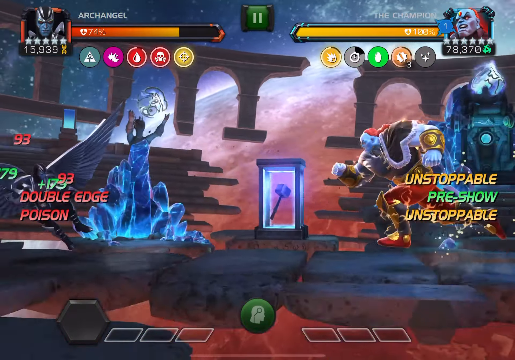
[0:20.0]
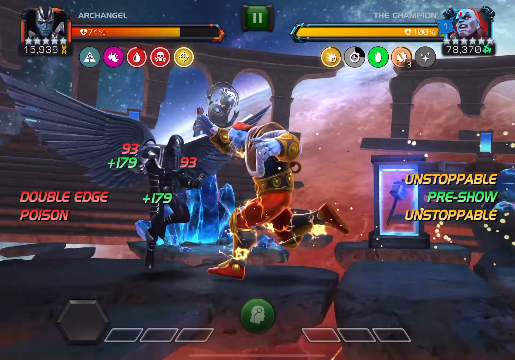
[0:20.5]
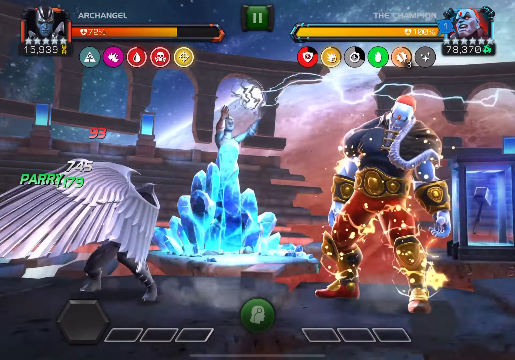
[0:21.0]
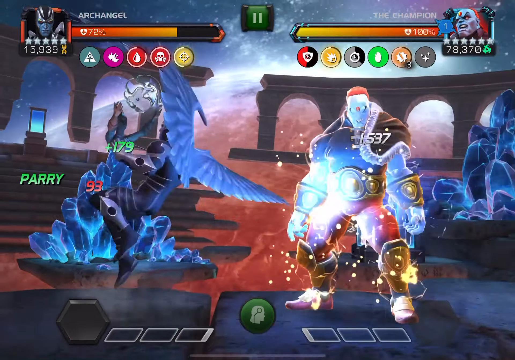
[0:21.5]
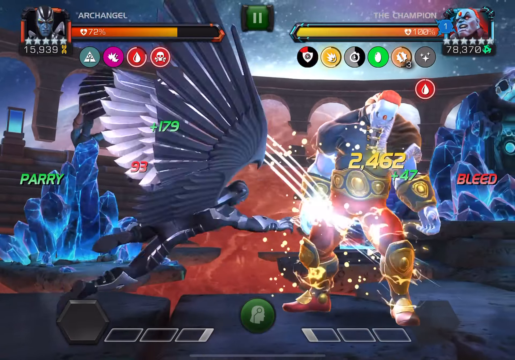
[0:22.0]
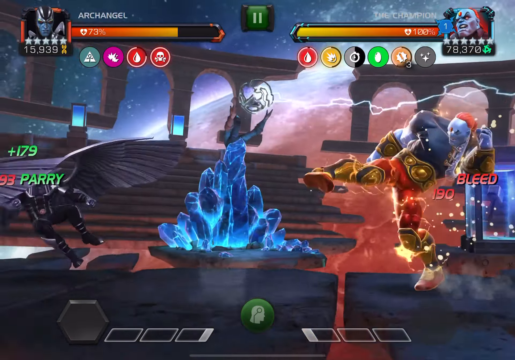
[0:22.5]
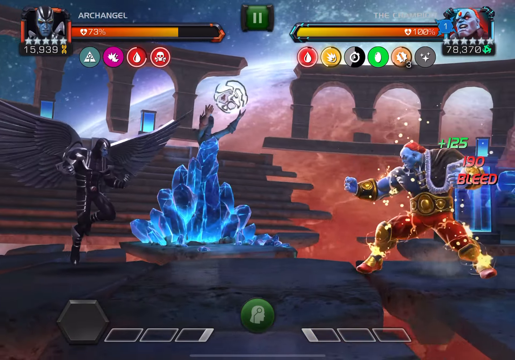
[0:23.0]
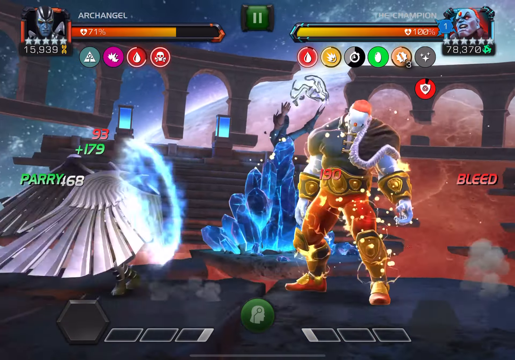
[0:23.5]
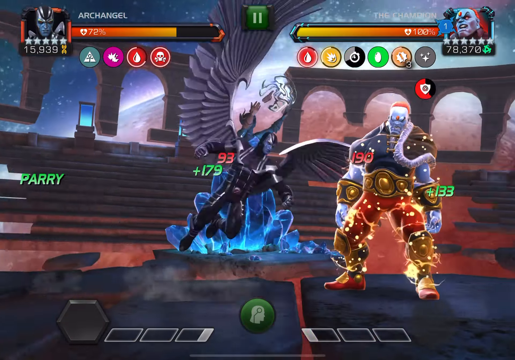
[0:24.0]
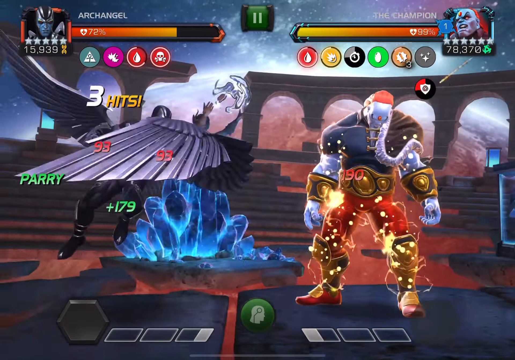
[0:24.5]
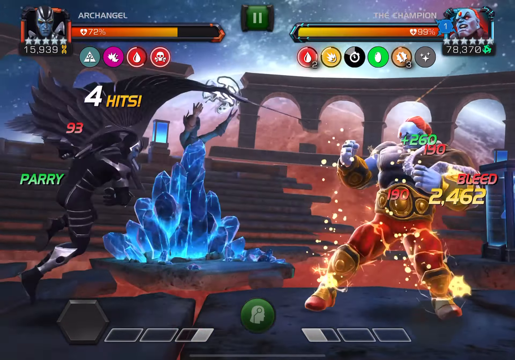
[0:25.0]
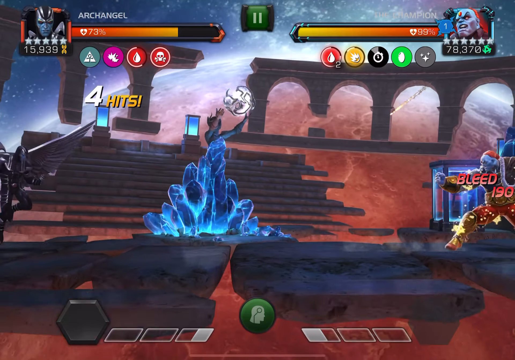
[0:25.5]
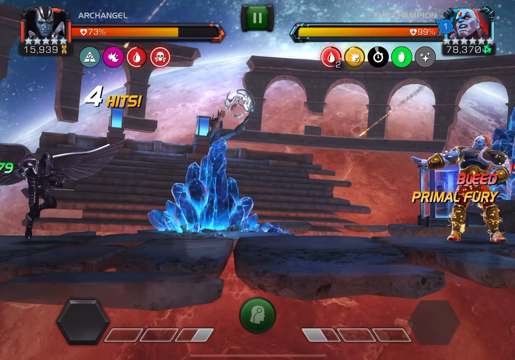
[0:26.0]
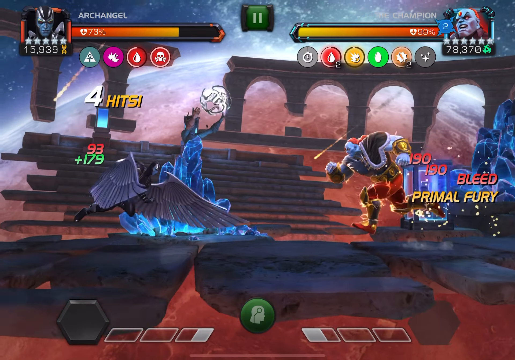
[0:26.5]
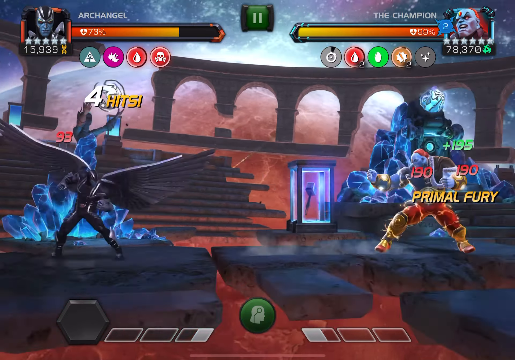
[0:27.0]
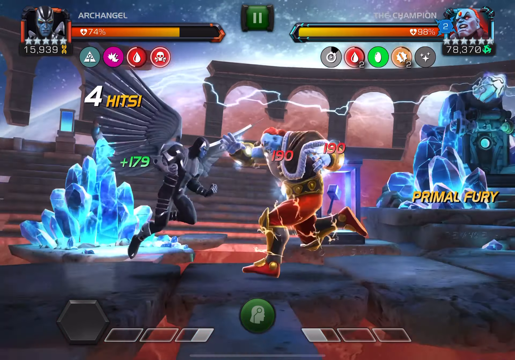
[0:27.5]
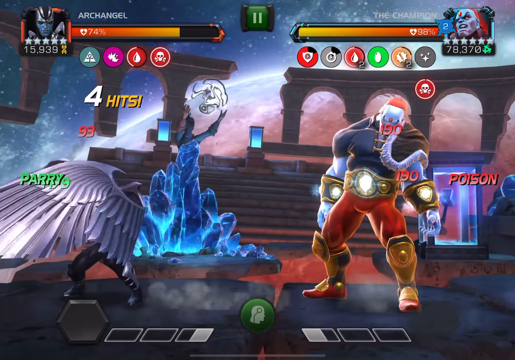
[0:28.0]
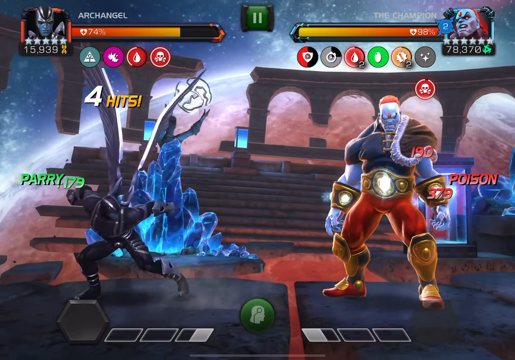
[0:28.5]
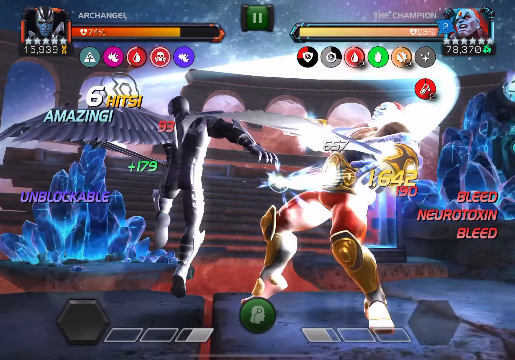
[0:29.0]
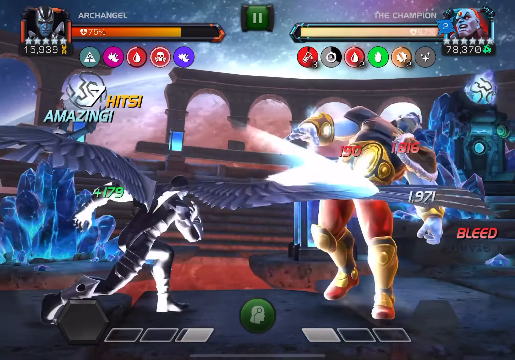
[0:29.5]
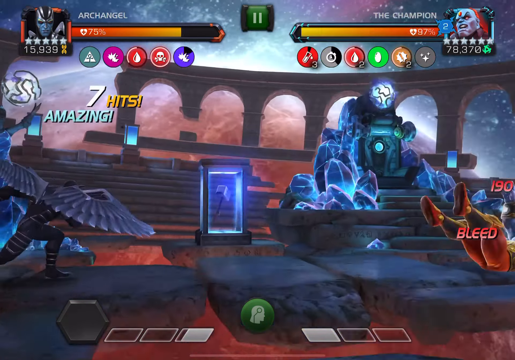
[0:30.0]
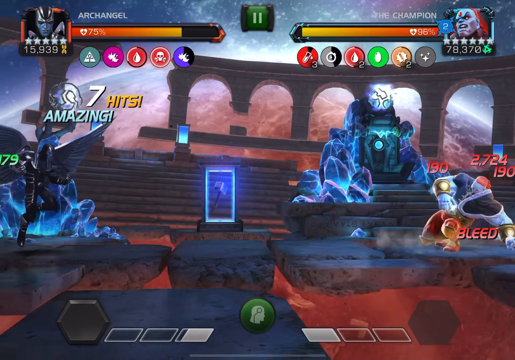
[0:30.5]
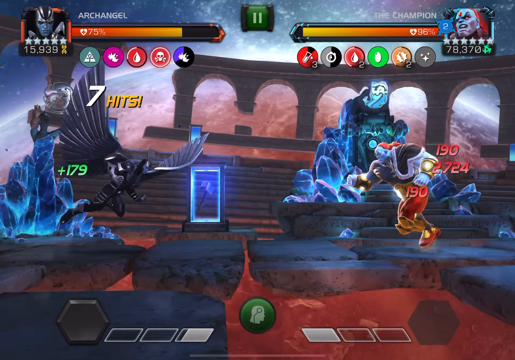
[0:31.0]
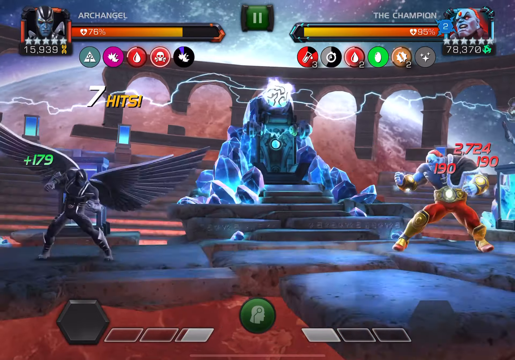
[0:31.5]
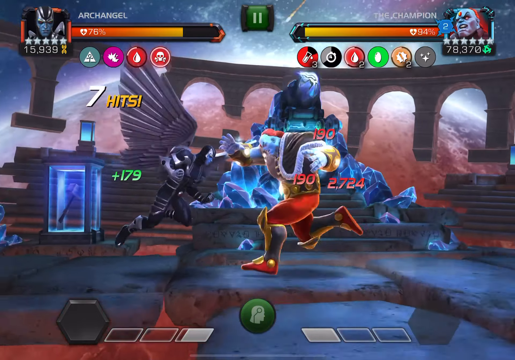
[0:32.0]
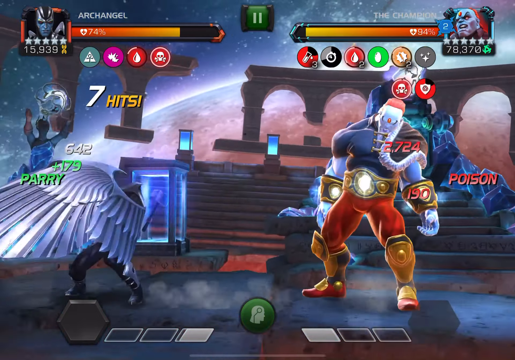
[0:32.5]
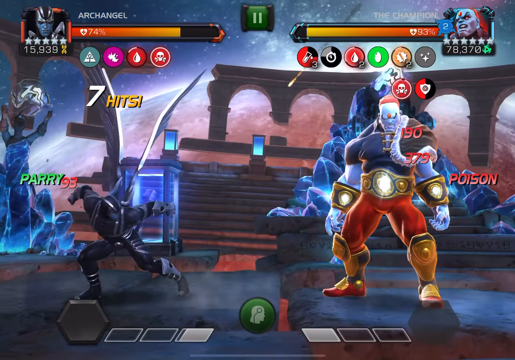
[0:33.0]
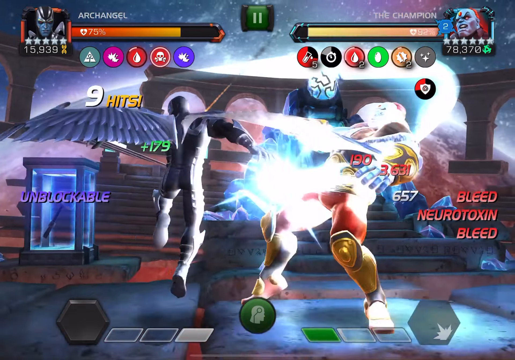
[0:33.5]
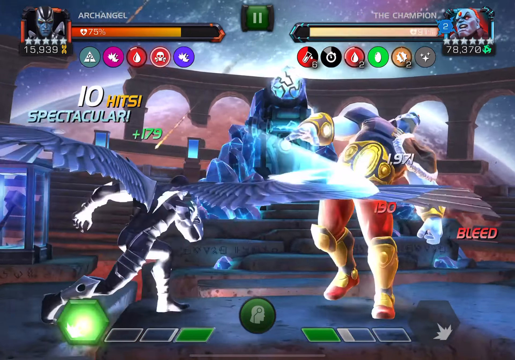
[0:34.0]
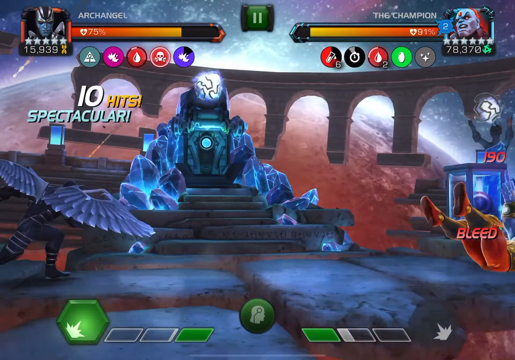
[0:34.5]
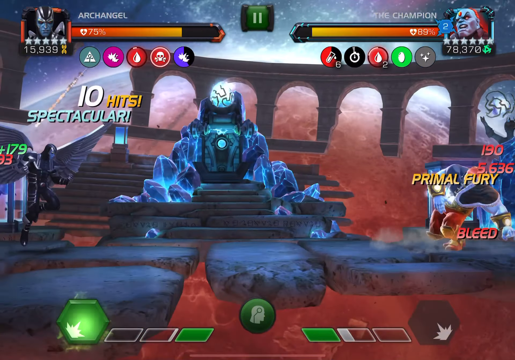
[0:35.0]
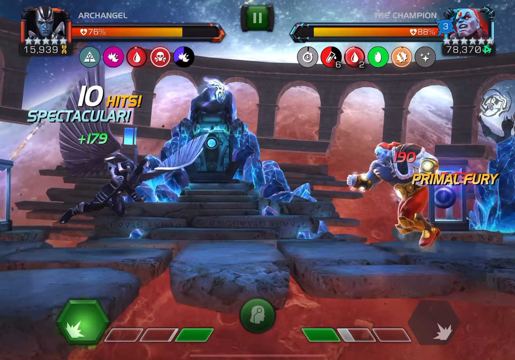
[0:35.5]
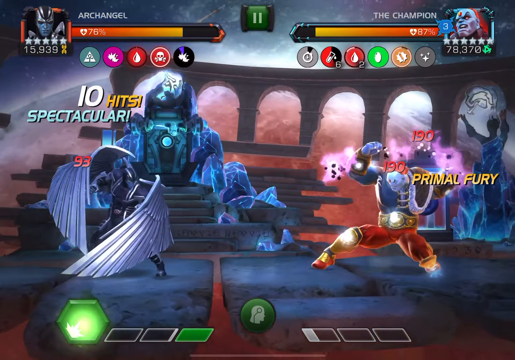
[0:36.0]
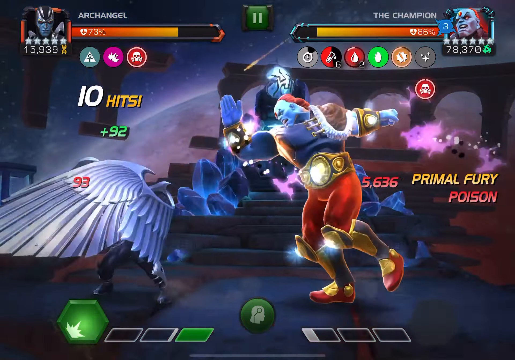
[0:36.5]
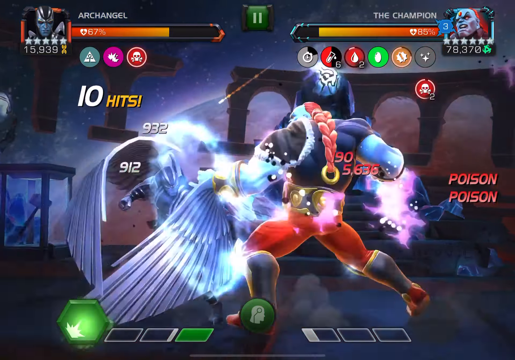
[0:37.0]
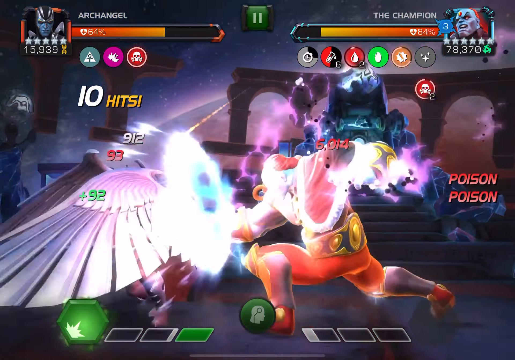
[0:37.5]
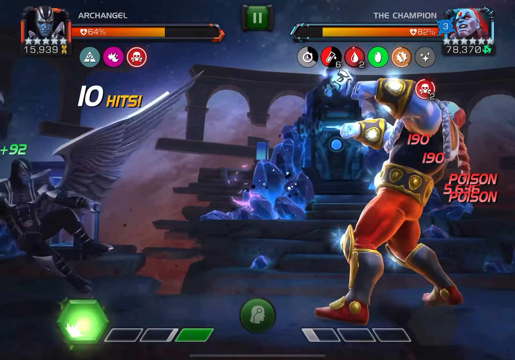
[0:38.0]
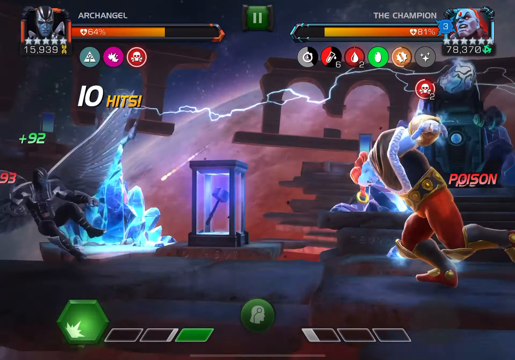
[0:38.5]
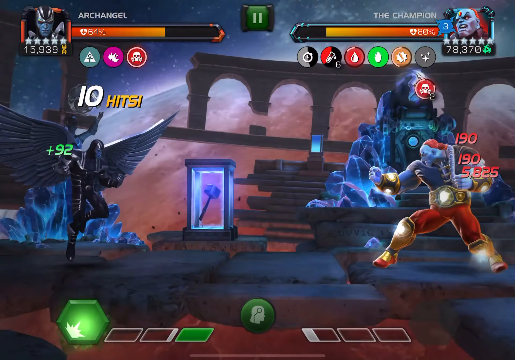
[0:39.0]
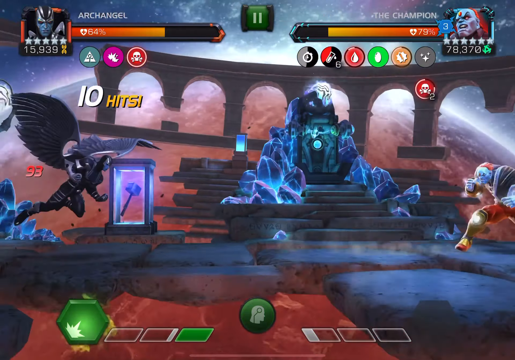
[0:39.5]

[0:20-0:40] The fighting game, possibly Marvel or X-Men, shows Archangel versus the Champion. Their health bars are on either side at the top left and right of the screen, with the different status elements at the bottom, and below their names is apparently the current score or a ranking of some sort. Their traits show on either side: the Champion is unstoppable, while Archangel is doubled down and poisoned. Archangel looks like a black angel ninja. The Champion appears to be a blue figure with an orange gem on his head, wearing what looks like gold armor and a gold belt. They fight back and forth in what looks like a fairly even fight, but Archangel has lost the most health, so the Champion appears to be winning, landing some big combos on Archangel.